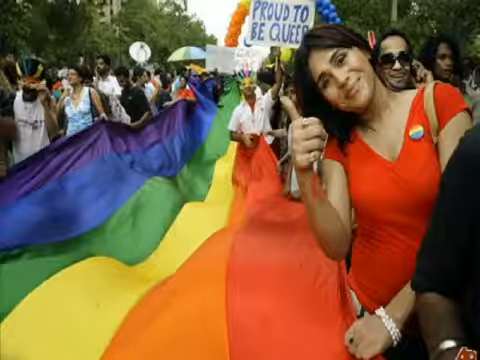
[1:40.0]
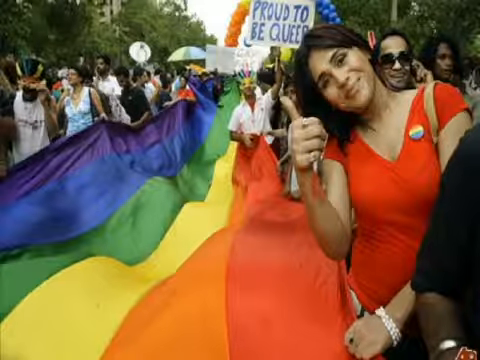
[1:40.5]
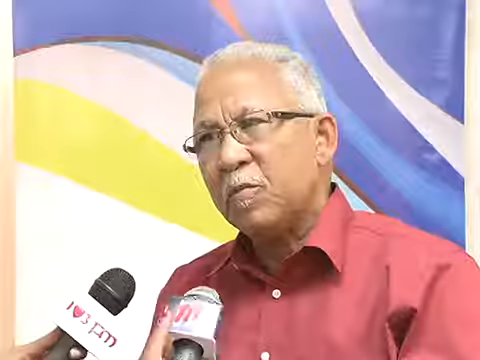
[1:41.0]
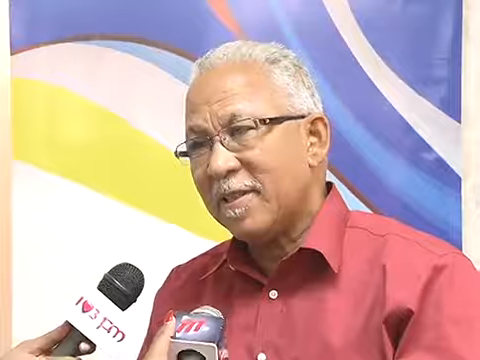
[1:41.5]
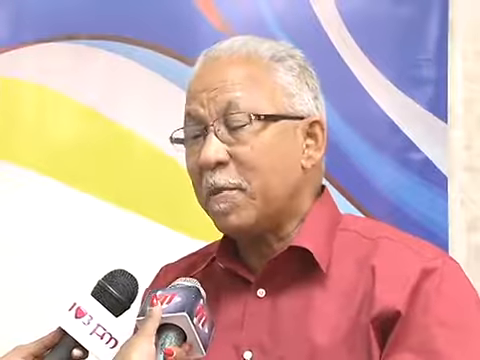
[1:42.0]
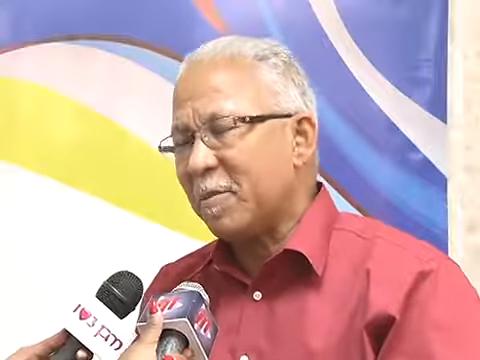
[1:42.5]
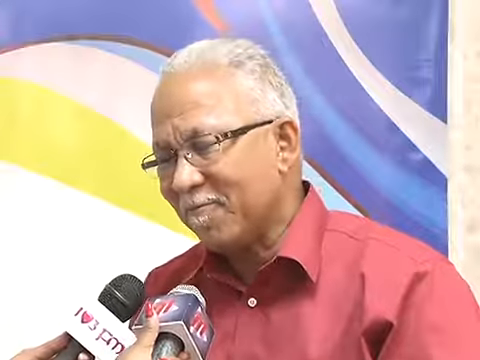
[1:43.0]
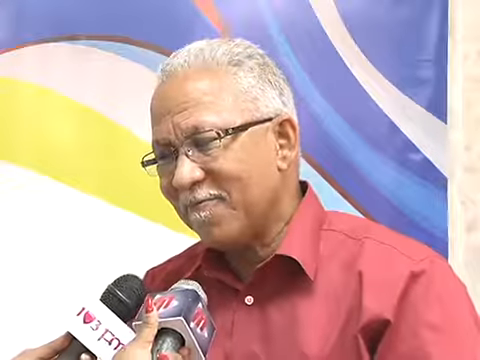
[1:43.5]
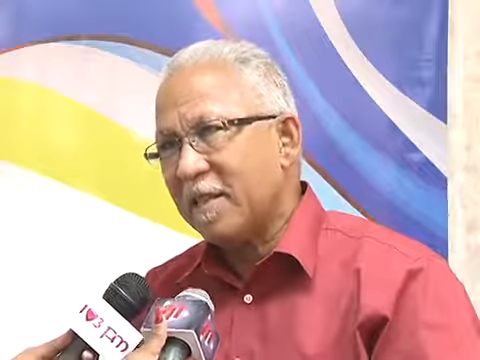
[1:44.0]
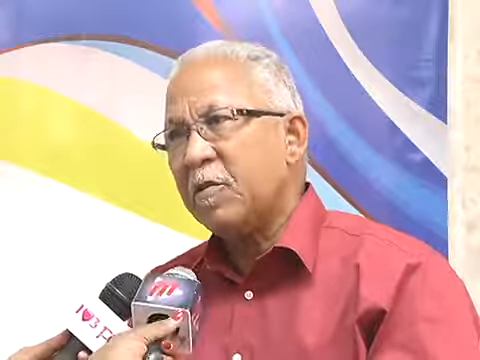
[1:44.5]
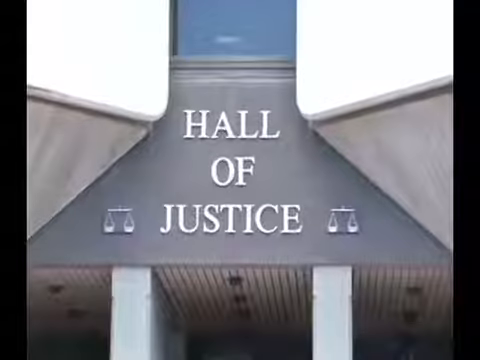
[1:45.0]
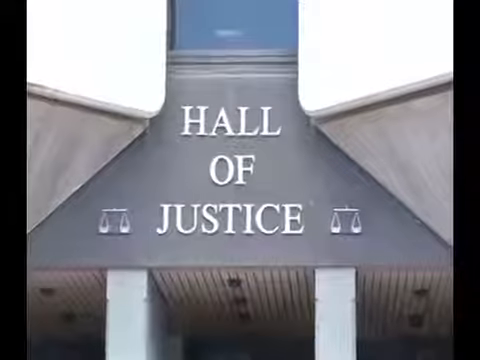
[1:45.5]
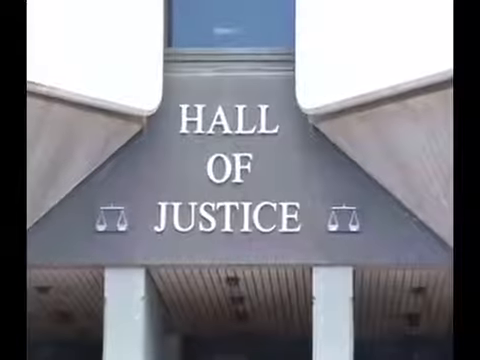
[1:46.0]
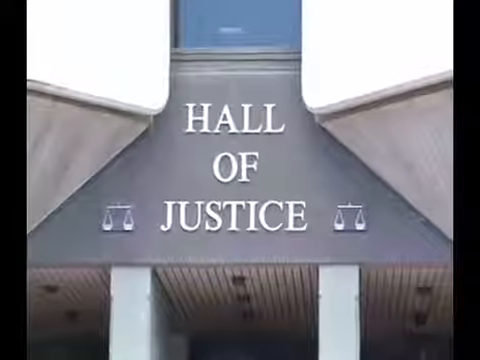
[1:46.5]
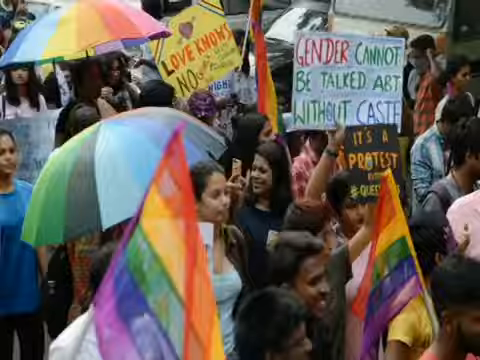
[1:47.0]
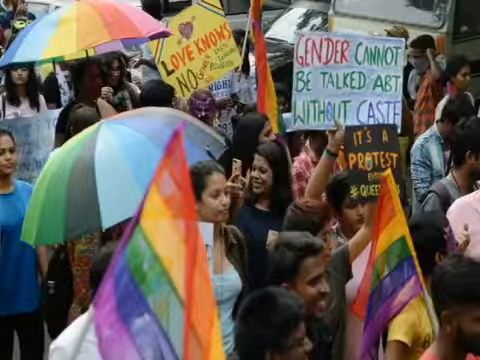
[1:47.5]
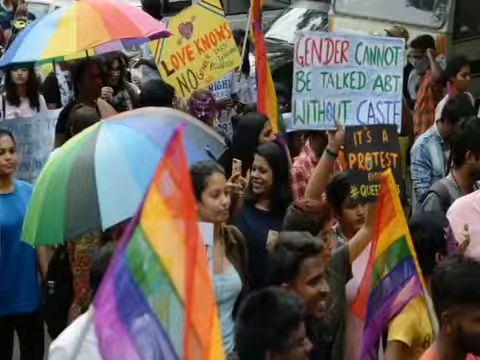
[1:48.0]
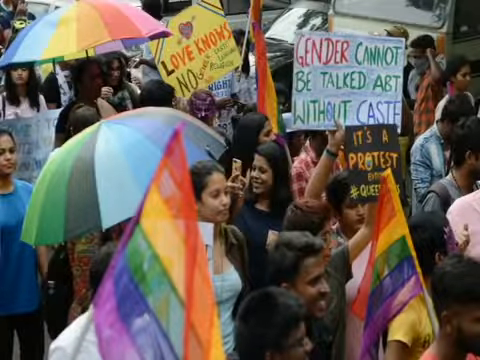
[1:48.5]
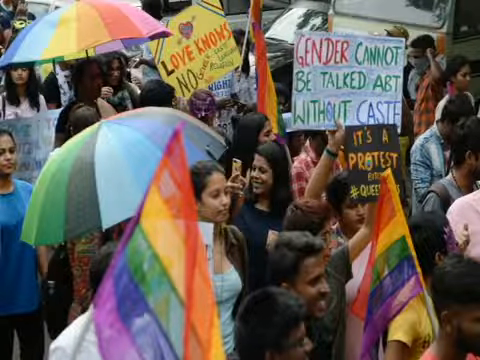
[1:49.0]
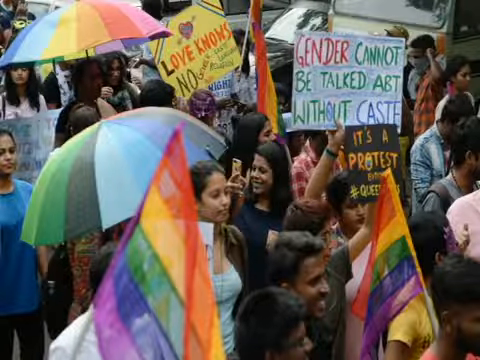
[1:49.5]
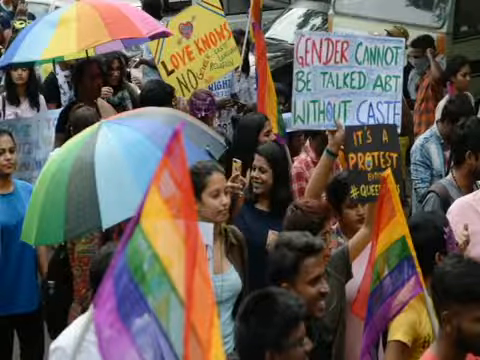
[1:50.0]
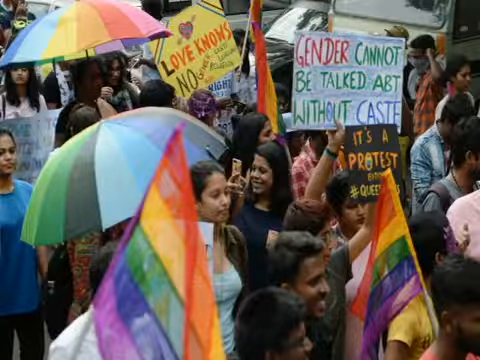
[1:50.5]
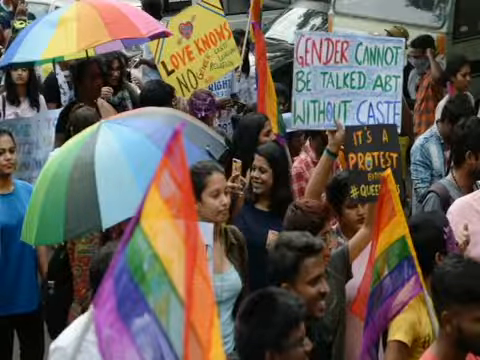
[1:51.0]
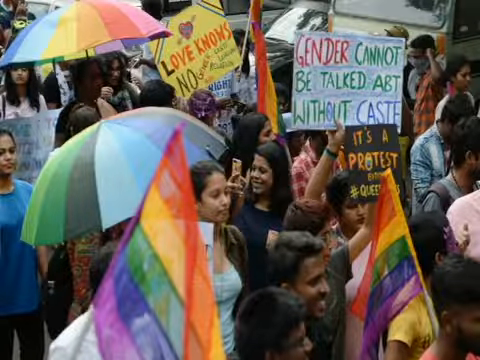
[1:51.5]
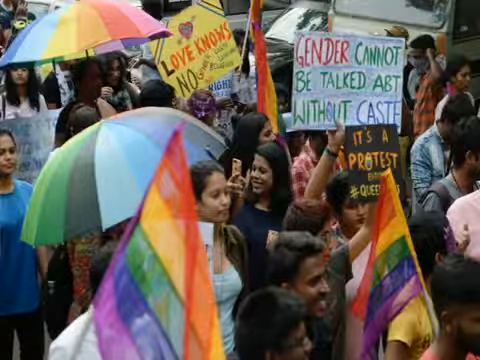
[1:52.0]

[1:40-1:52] A man in an old rose pink shirt talks passionately to the camera crew, who hold two microphones in front of him; the people holding the microphones cannot be seen. Behind him is a modern striped picture in white, yellow, light pink and various blues. The outside of the Hall of Justice follows, with the two sets of white scales on either side of the hall's name. Then a crowd at a pride march appears, with two pride flags and two rainbow-coloured pride umbrellas. Many people in the crowd hold placards: one reads "gender cannot be talked about without caste" and another reads "it's a protest, #queens", with the rest hidden behind a flag. A yellow placard in the background reads "love knows no", with the rest of its writing not visible. A lady in the centre of the shot takes a picture on her phone. Some people are smiling and some are not.